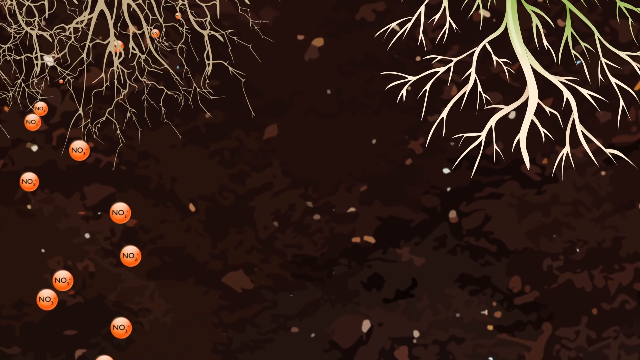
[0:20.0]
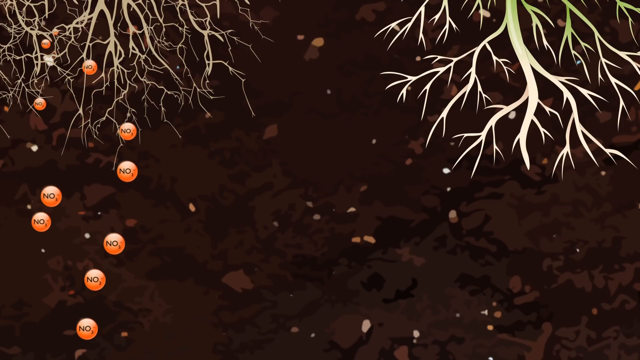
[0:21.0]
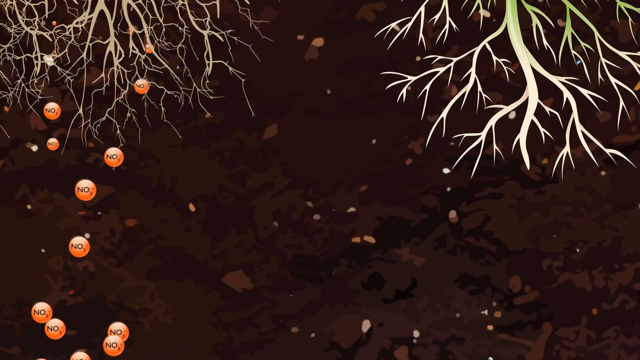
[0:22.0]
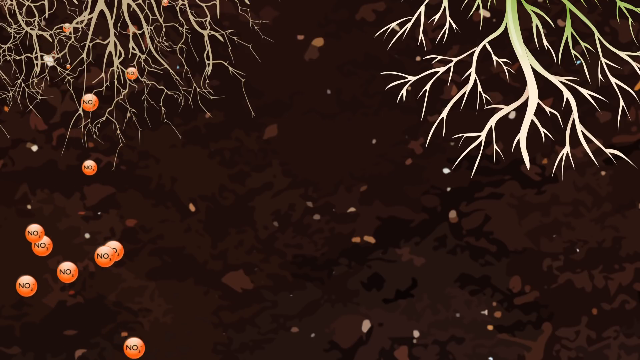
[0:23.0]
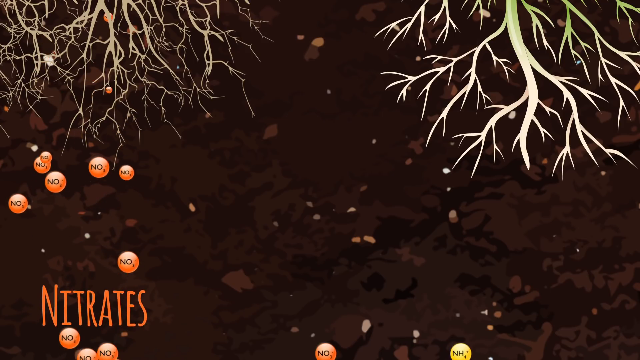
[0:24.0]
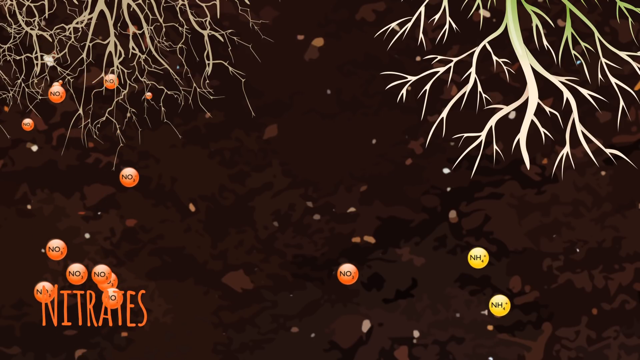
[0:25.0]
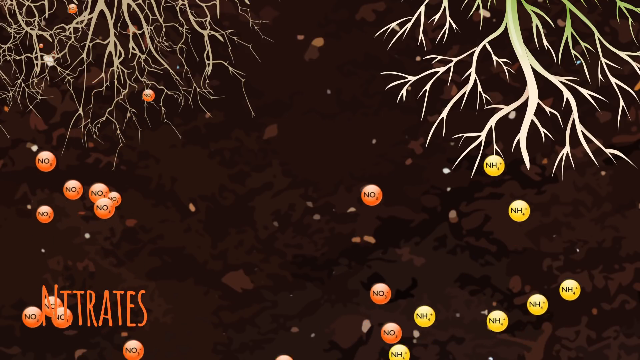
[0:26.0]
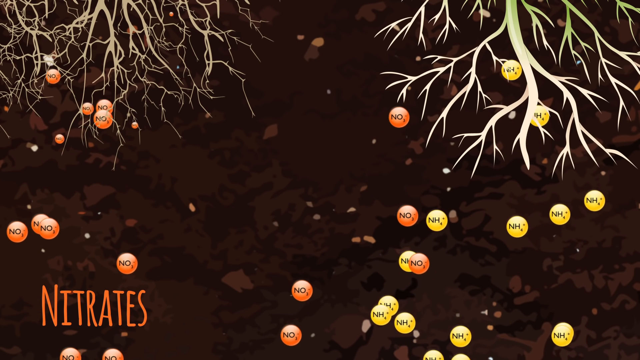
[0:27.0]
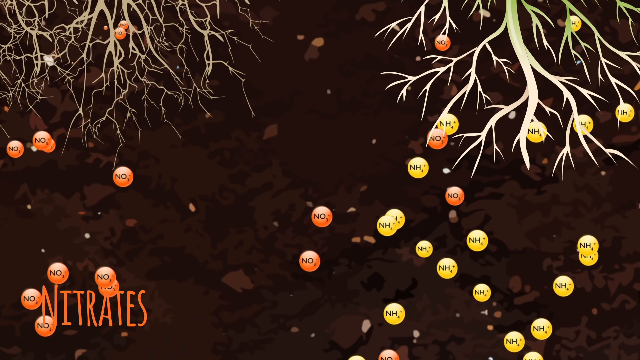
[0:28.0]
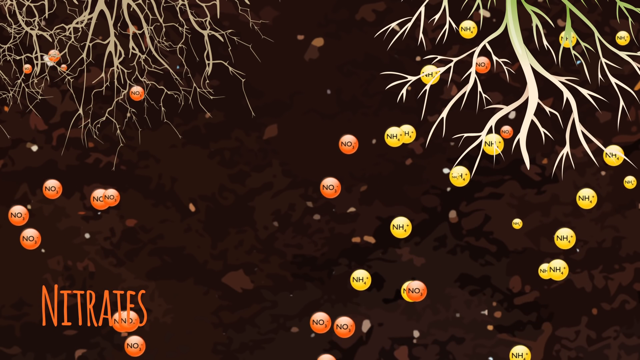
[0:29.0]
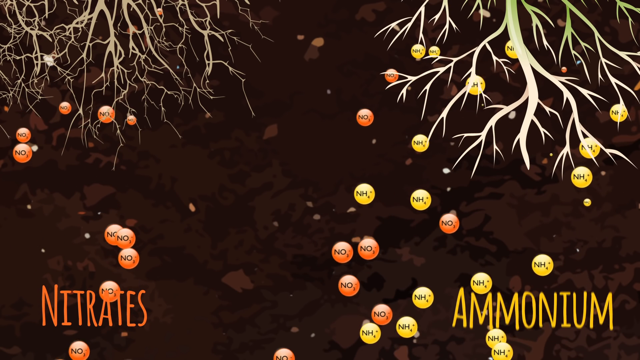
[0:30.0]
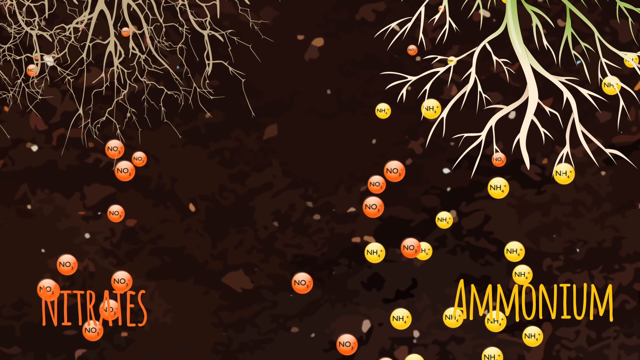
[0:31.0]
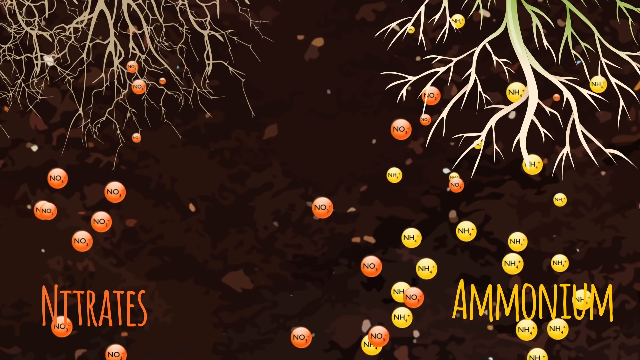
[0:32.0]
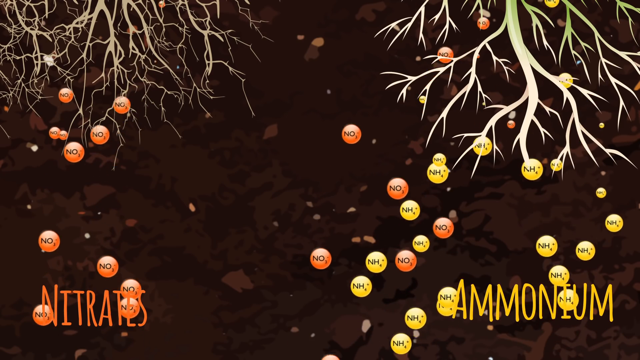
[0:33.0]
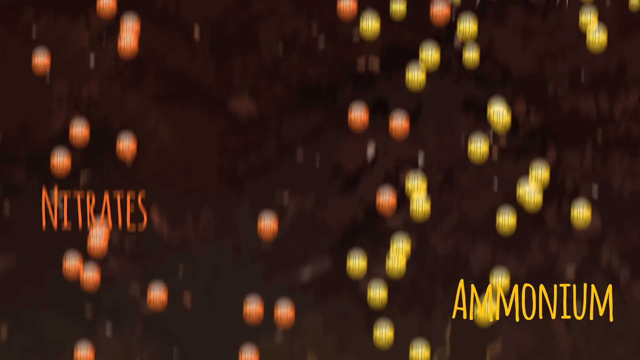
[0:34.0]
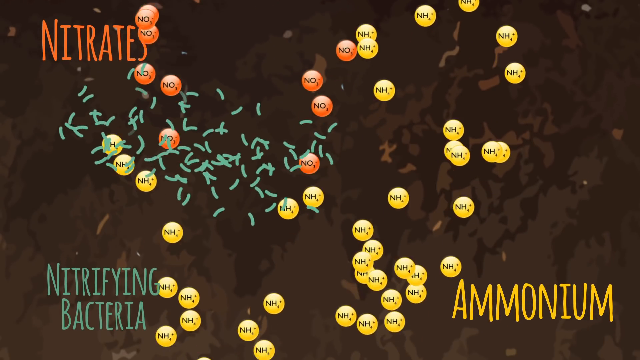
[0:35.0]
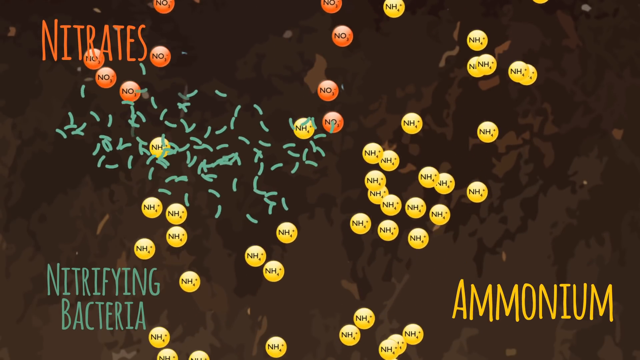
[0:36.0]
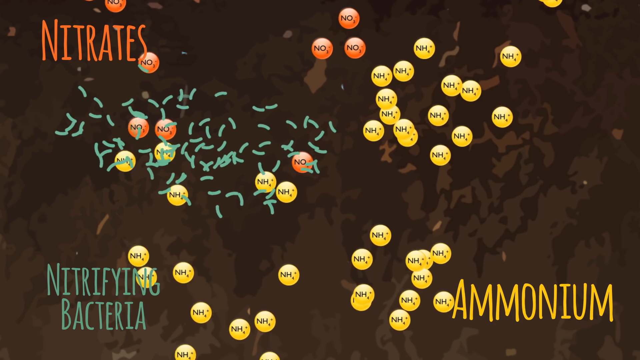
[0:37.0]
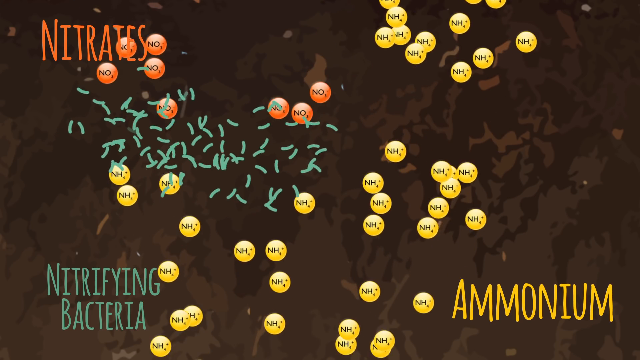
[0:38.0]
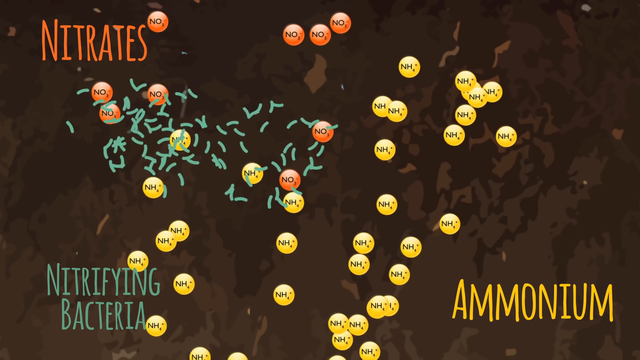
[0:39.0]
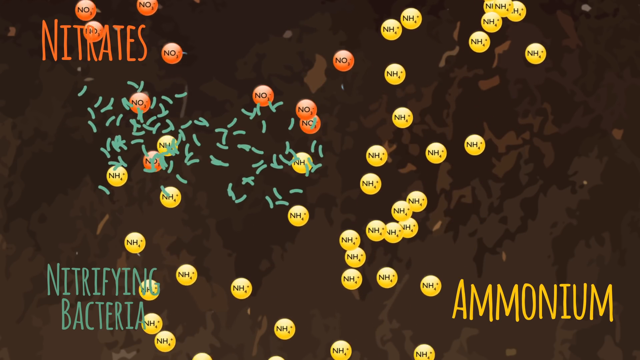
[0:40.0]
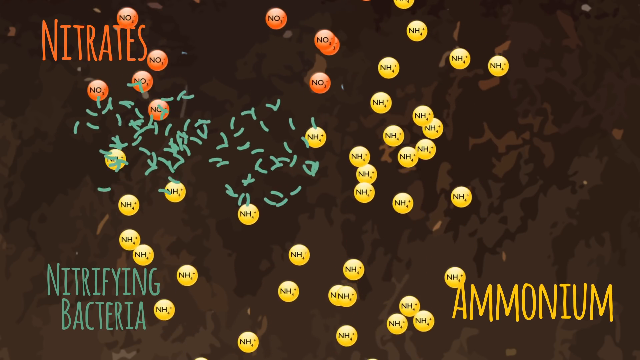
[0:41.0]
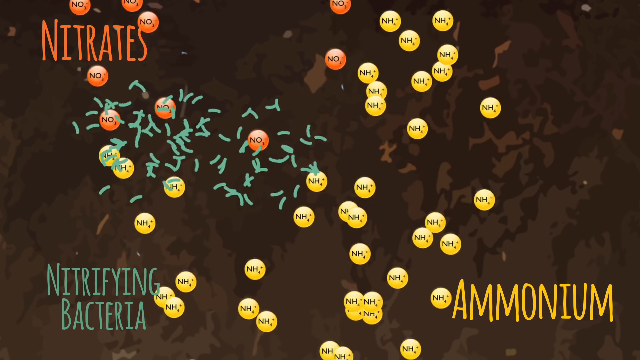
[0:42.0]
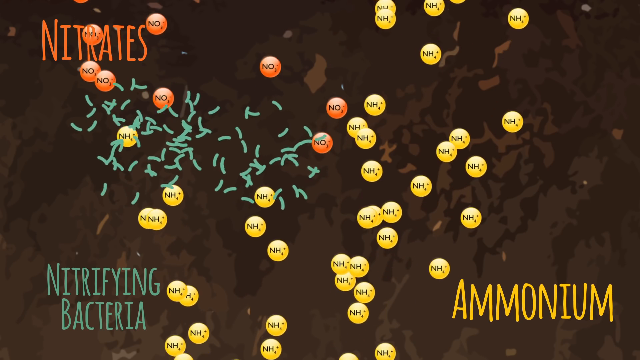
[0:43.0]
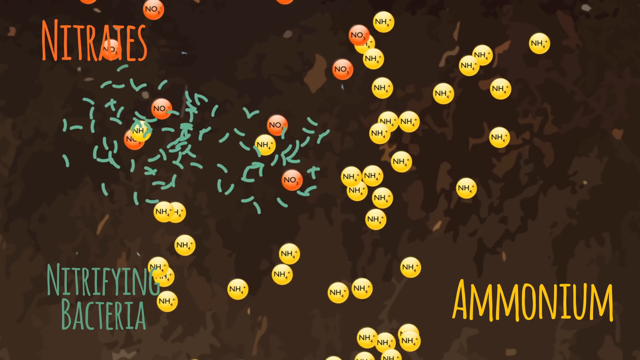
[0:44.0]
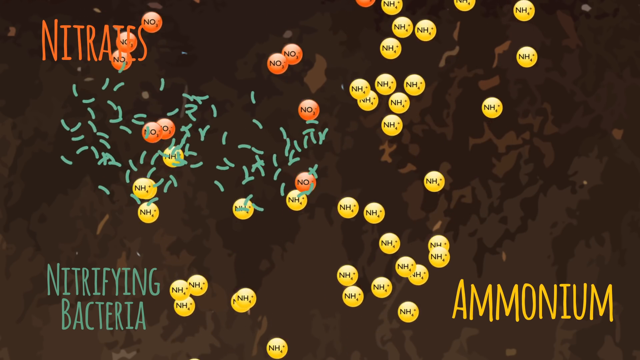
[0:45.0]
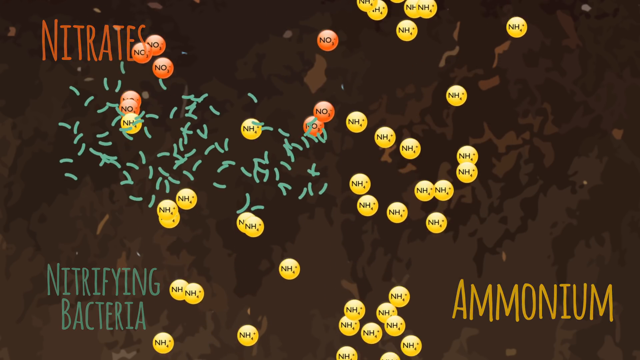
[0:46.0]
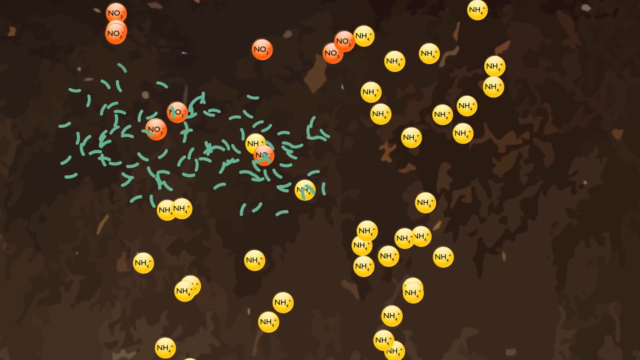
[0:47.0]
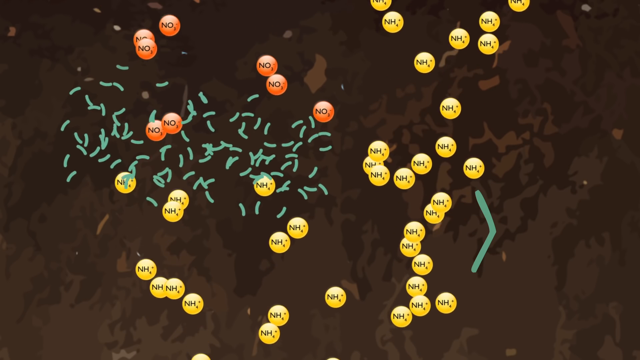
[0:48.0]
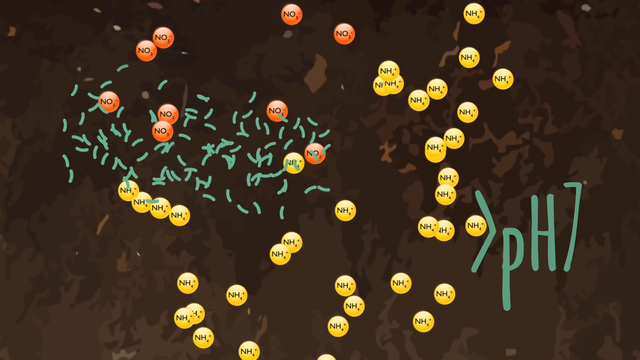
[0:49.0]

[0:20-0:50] Roots come from the top of the frame, with soil below them, and at the bottom brown circles, apparently marked with the letters "NO", drift upward. The word "Nitrates" appears in orange at the lower left. Yellow circles with the letters "NH" slowly come up on the right side and move upward, and the word "Ammontum" comes up in yellow writing on the lower right. Small green pieces, shards, pop up, and the words "Nitrifying bacteria" appear in the lower left corner. The circles keep going upward to the top of the frame, and a green arrow slowly pops up along with the letters "PH" and the number "6".